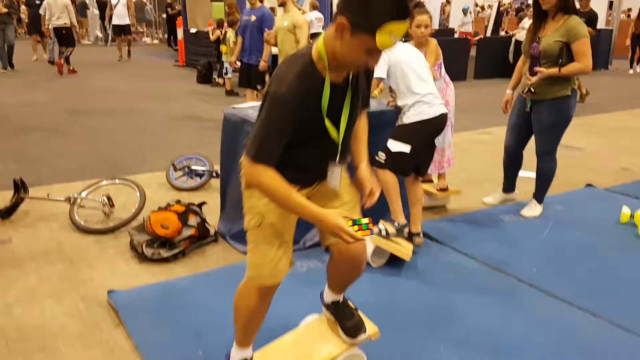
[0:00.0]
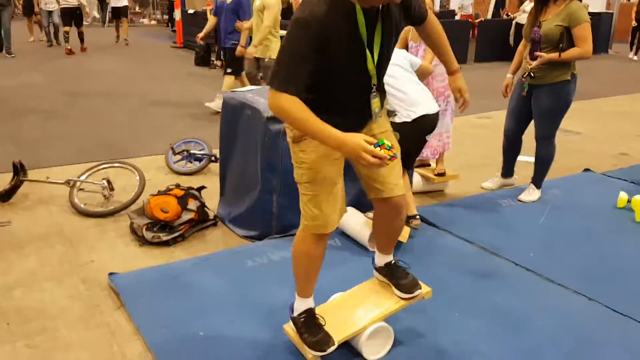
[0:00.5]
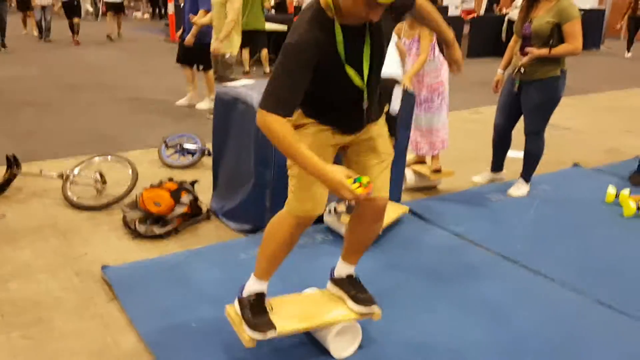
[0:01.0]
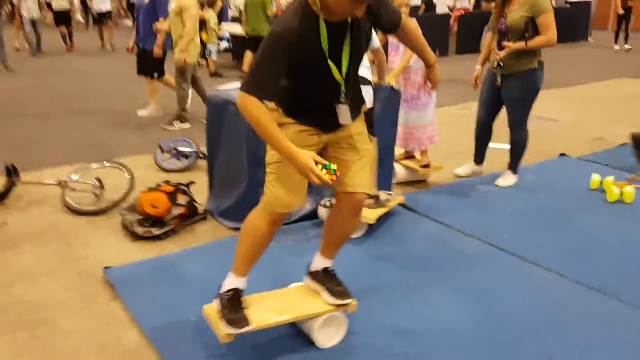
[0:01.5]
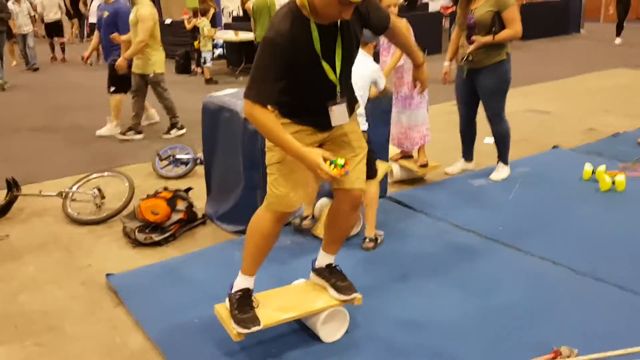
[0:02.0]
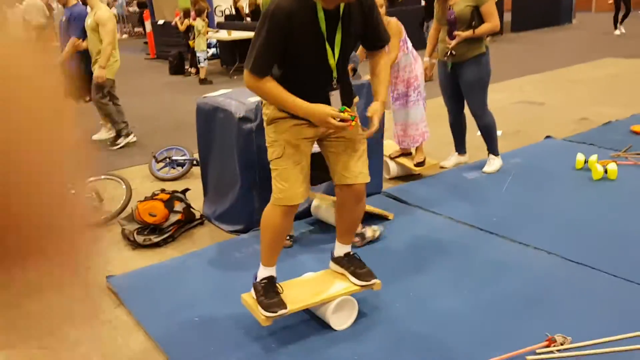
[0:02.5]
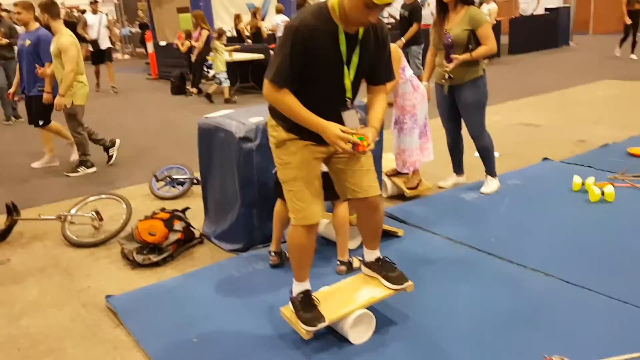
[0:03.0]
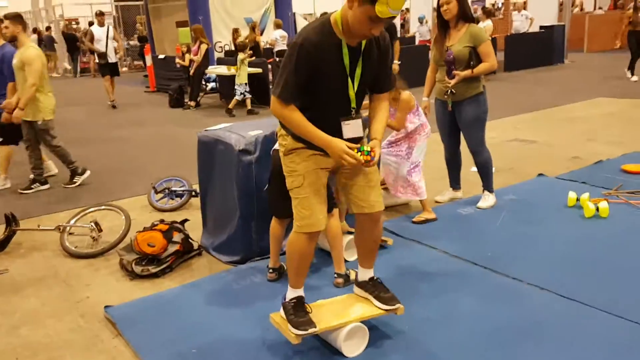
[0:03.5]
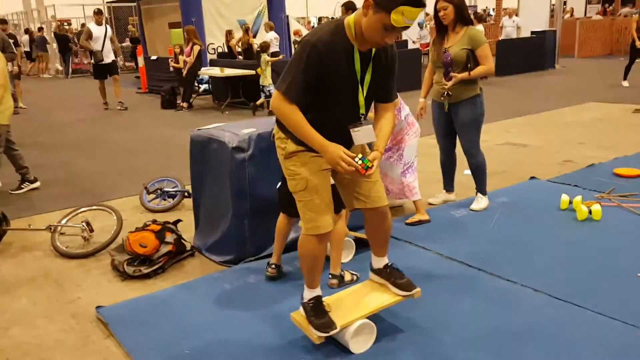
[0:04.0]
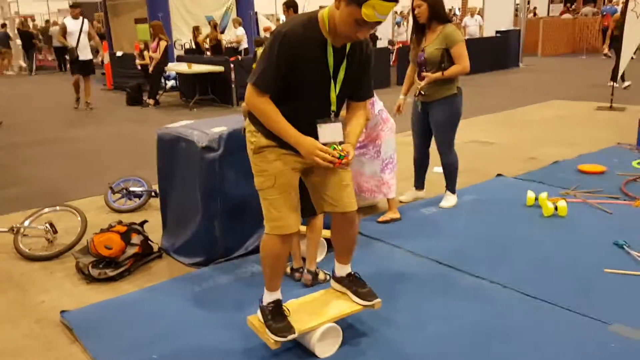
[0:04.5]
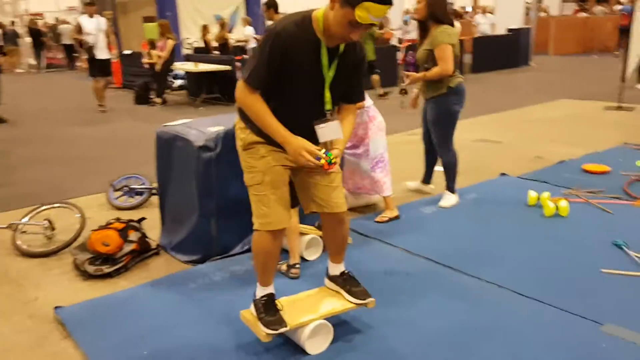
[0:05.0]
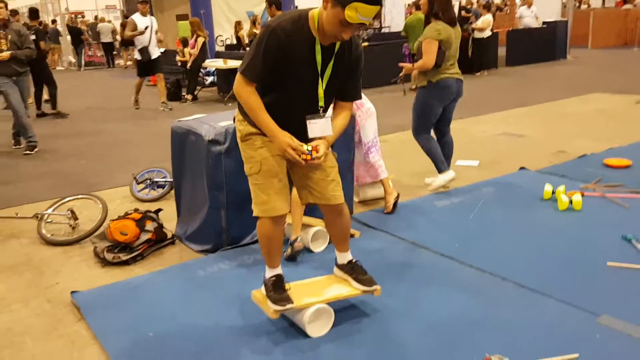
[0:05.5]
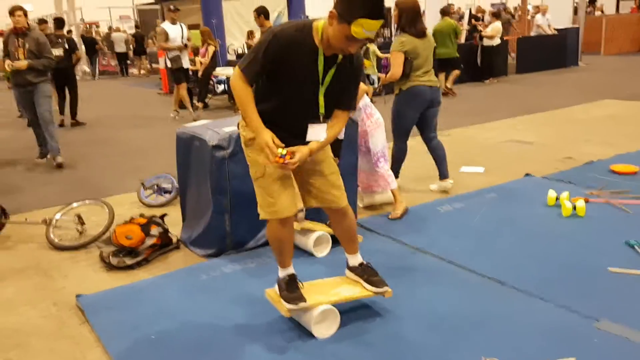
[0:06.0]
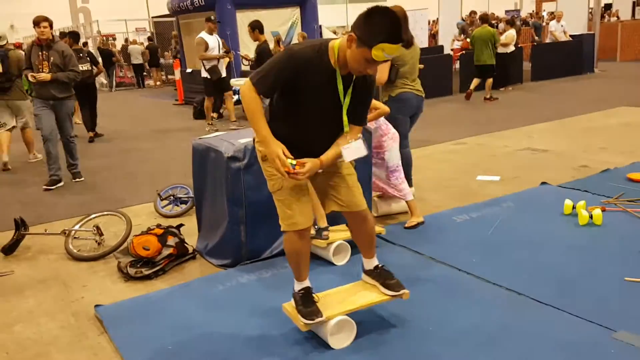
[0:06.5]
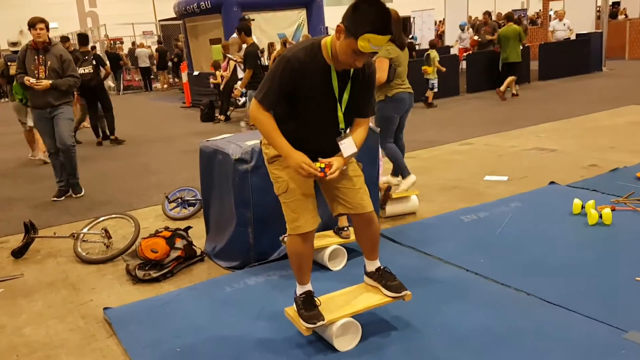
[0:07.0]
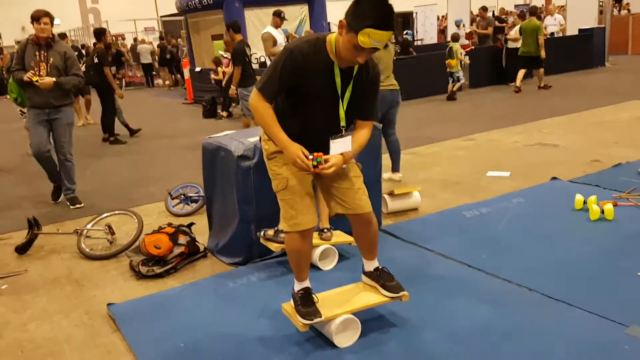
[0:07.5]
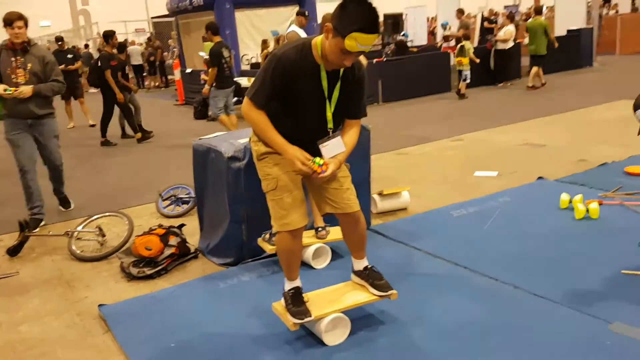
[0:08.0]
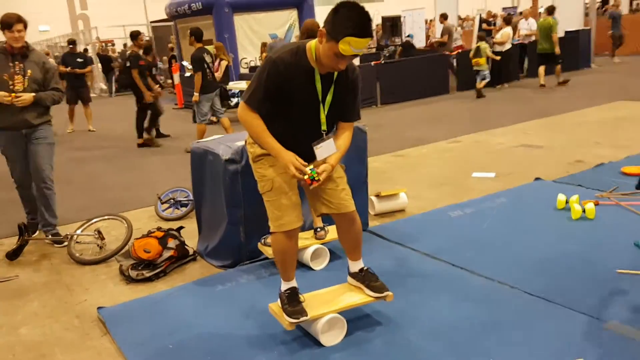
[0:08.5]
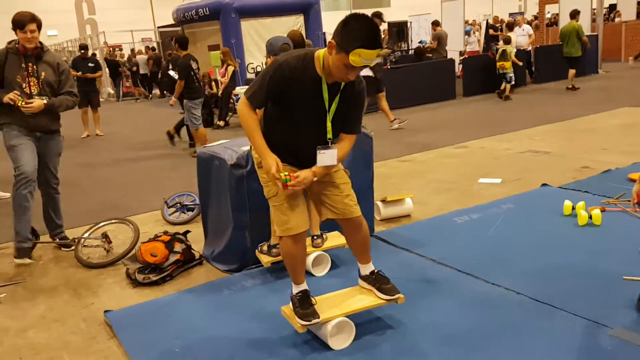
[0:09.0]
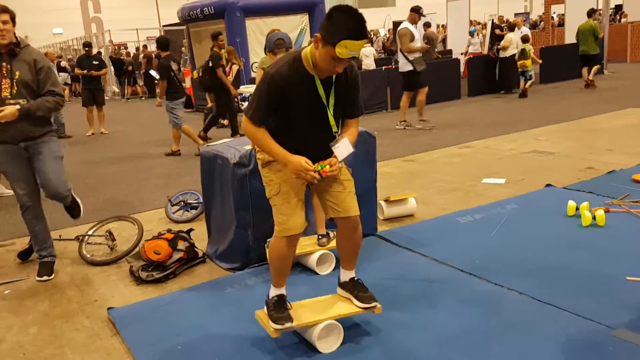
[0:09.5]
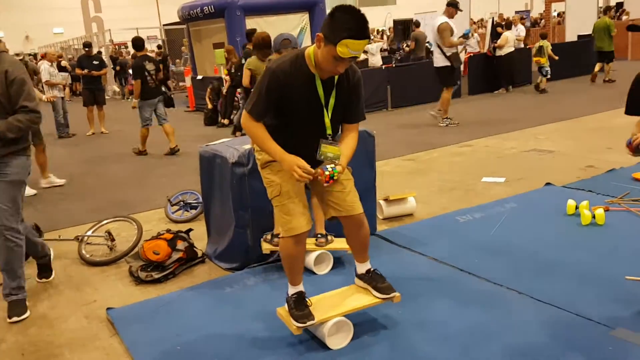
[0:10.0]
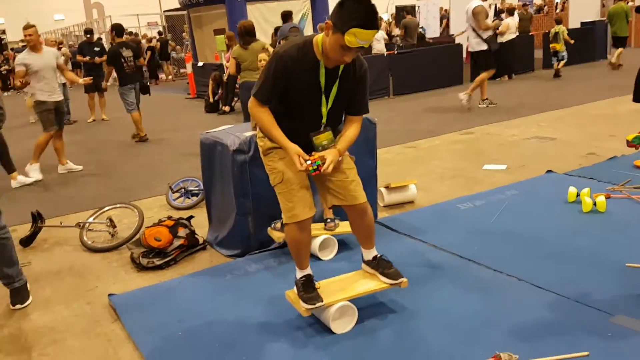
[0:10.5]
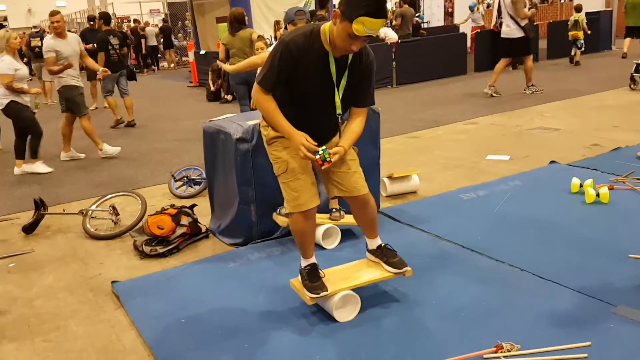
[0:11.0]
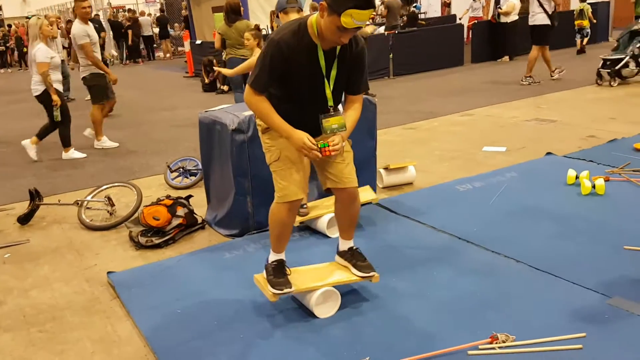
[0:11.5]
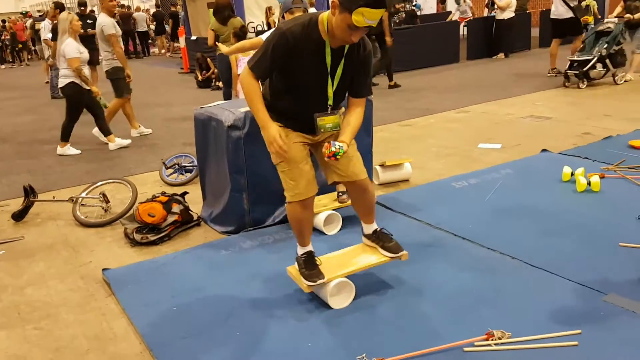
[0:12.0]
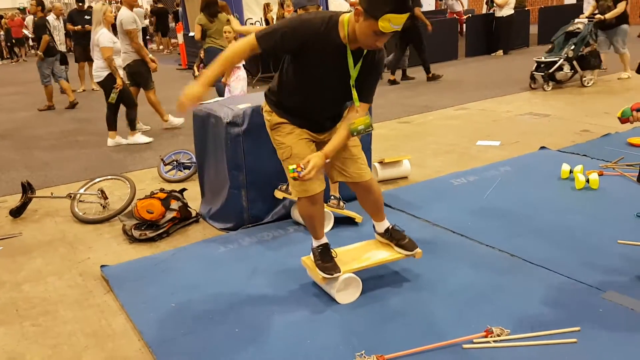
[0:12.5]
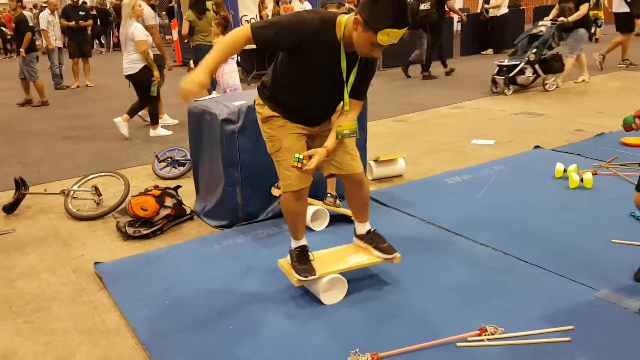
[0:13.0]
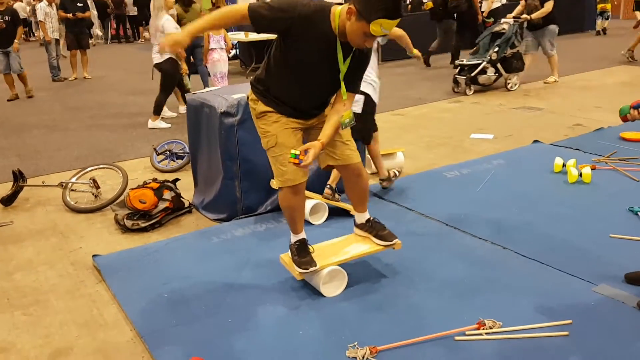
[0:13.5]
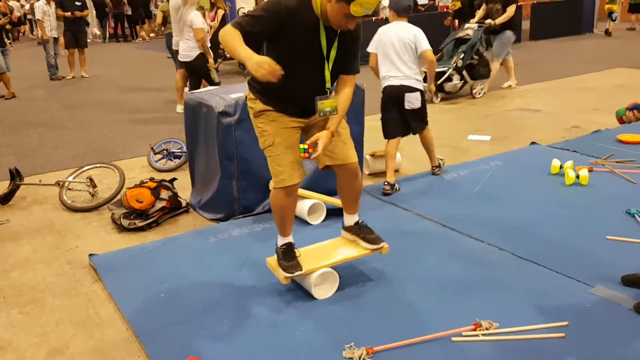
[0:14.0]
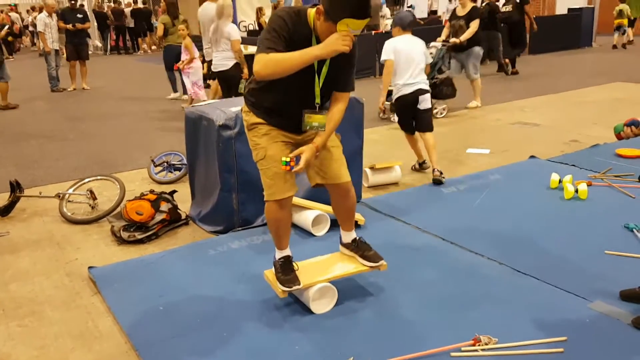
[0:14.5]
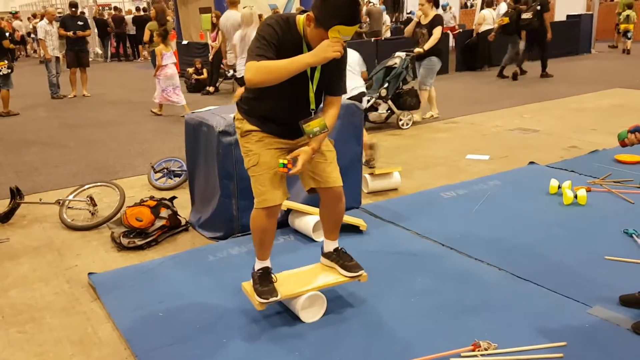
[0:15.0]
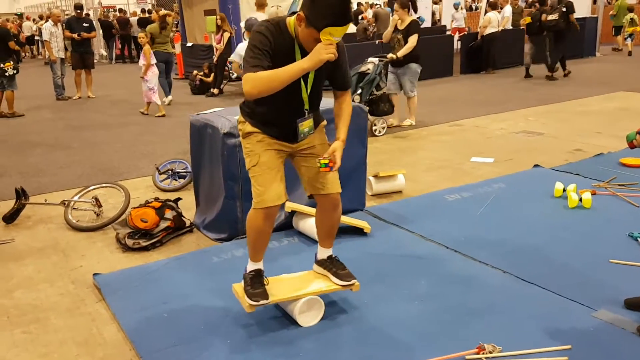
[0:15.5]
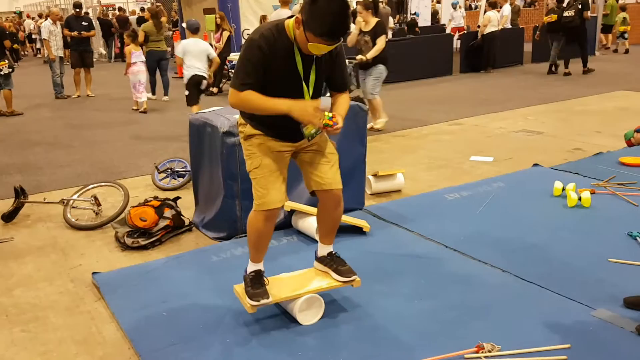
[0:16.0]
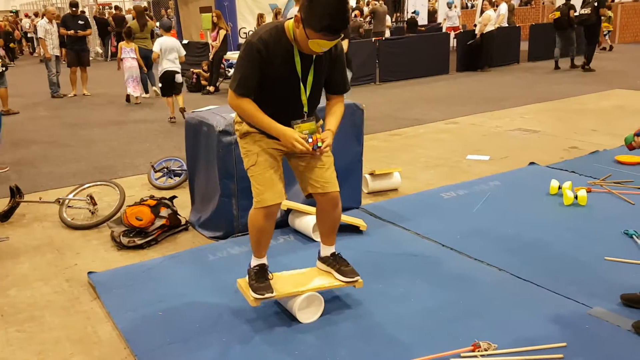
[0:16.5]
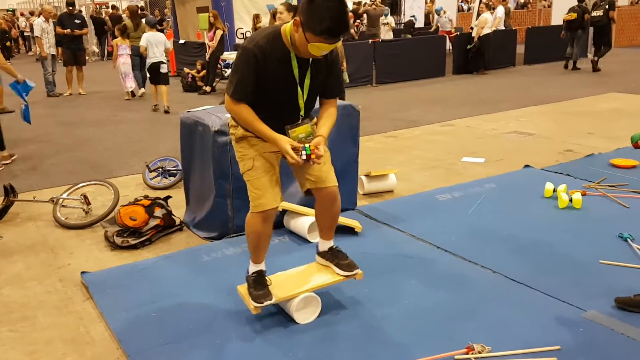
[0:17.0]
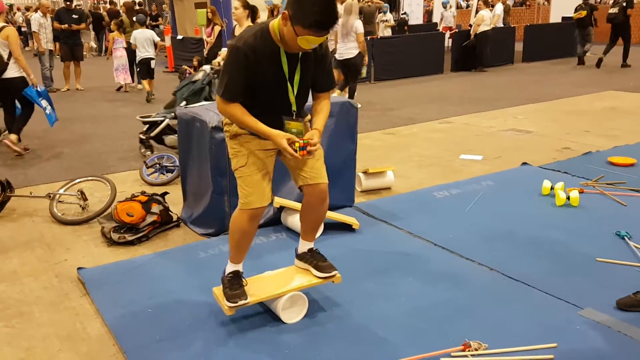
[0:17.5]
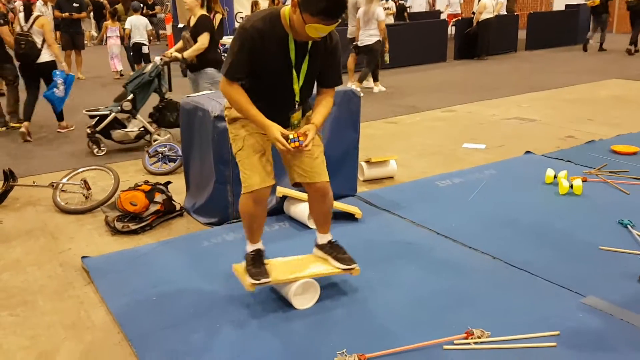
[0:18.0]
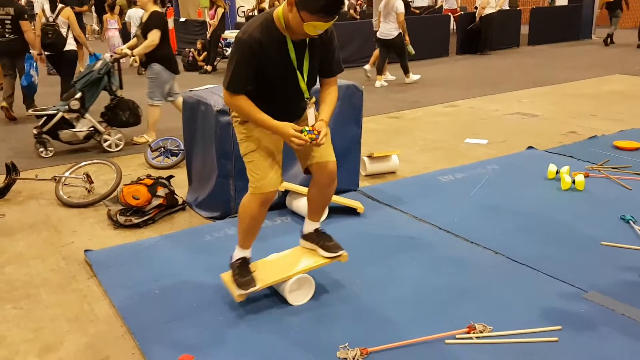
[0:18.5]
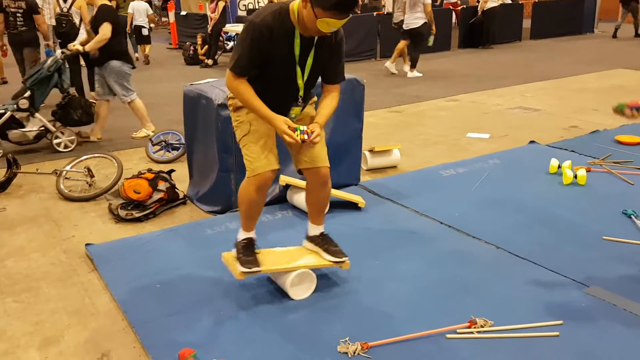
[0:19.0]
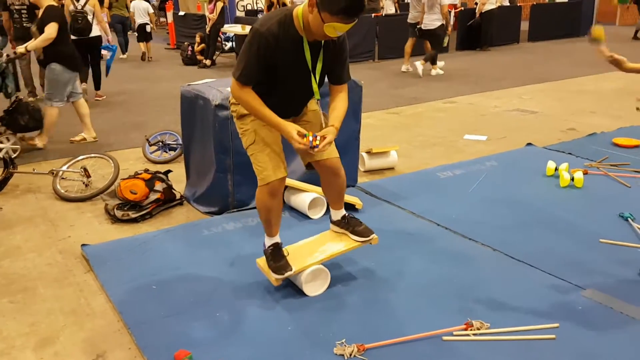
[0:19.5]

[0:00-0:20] The video opens on what is maybe some type of convention. A blue mat is laid down, resembling the kind sold for home gymnastics, and people are kind of walking around among different activities. A person, male, probably in his teens or 20s and maybe Asian or Hispanic, wears a black shirt, shorts, tennis shoes and white socks. There appears to be PVC pipe, like plumbing pipe, in a circular shape, with a piece of wood on it at the very middle of the pipe. His feet are balanced on the board shoulder-width apart, and the board is kind of moving back and forth as he balances. In the background a little girl is doing the same thing, then a little boy gets on it, and the children kind of run off with their mom. Another boy in the background has balls that he is trying to juggle.